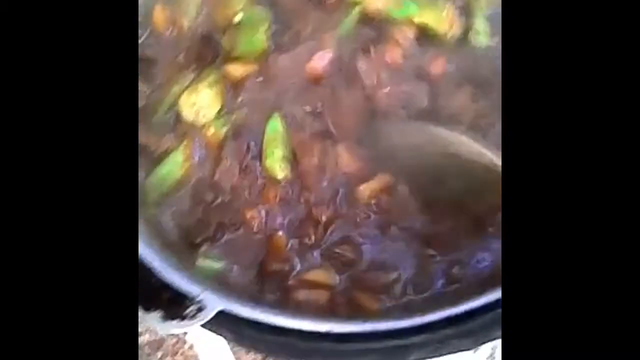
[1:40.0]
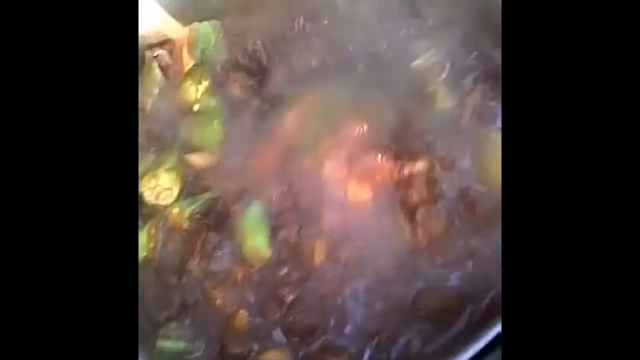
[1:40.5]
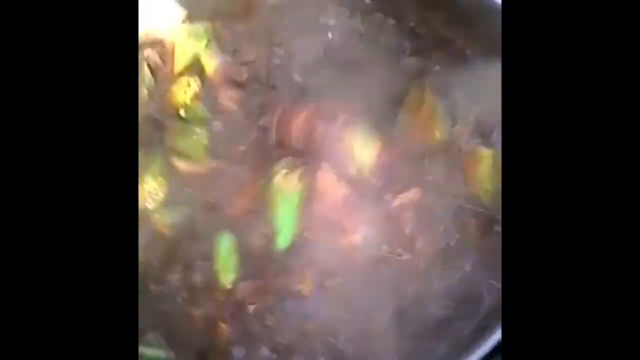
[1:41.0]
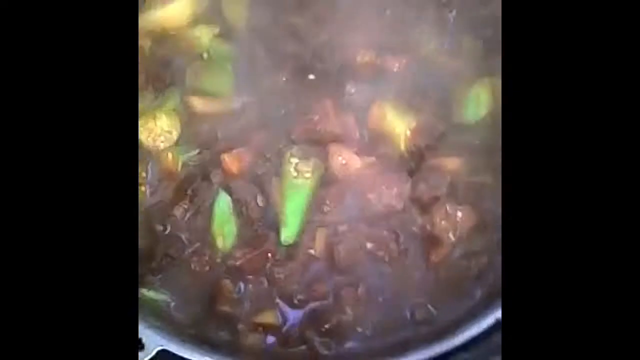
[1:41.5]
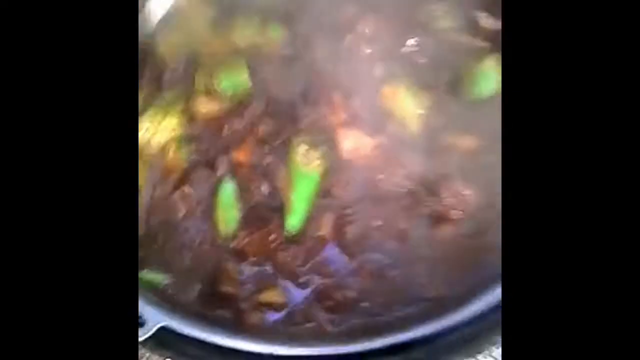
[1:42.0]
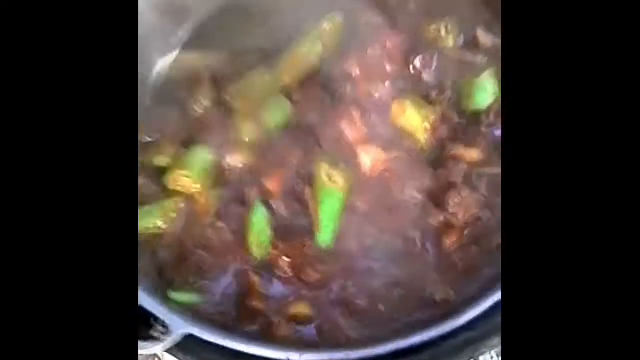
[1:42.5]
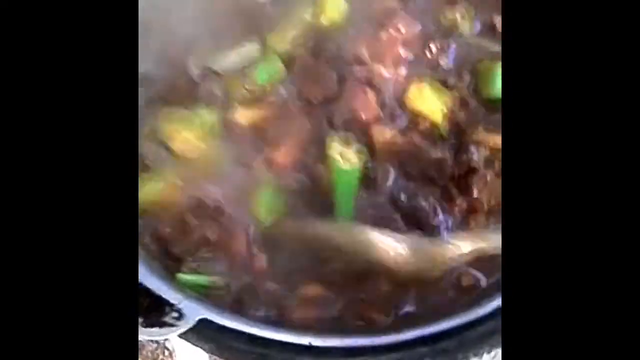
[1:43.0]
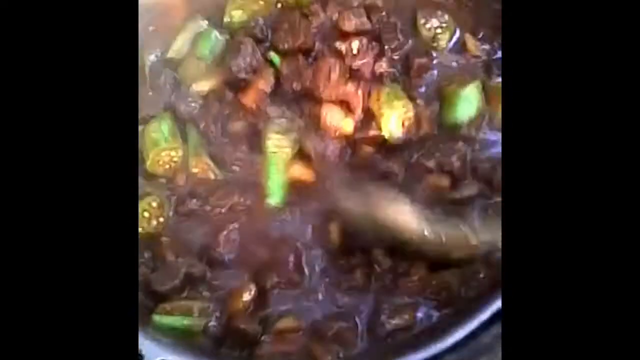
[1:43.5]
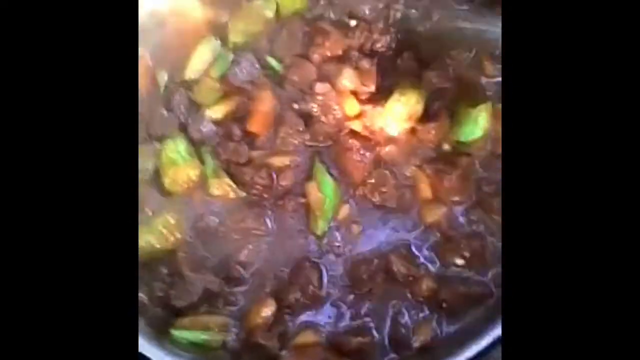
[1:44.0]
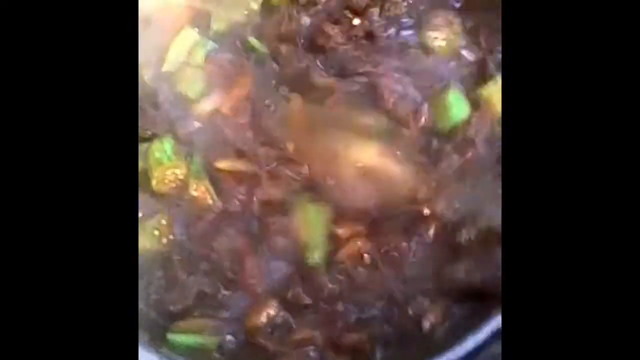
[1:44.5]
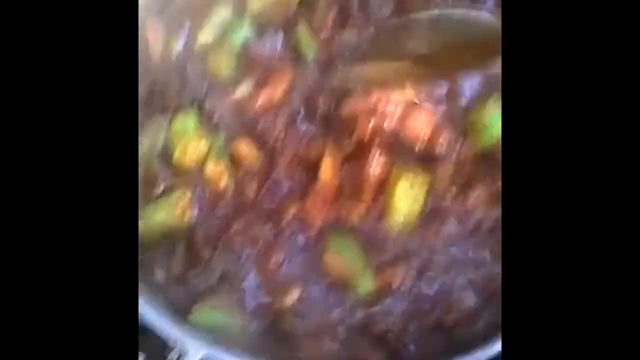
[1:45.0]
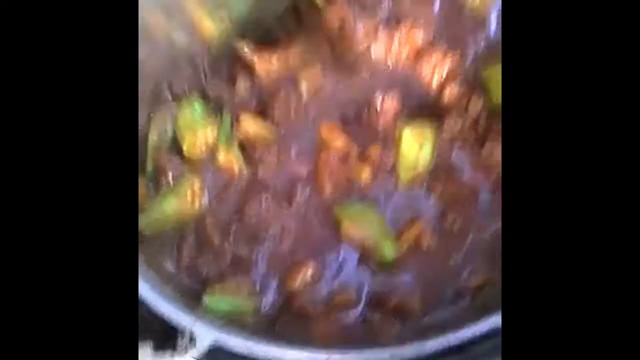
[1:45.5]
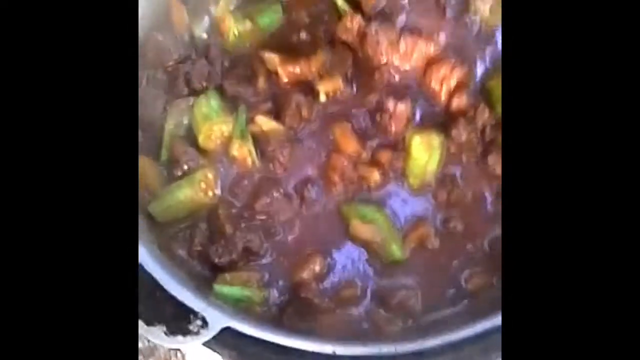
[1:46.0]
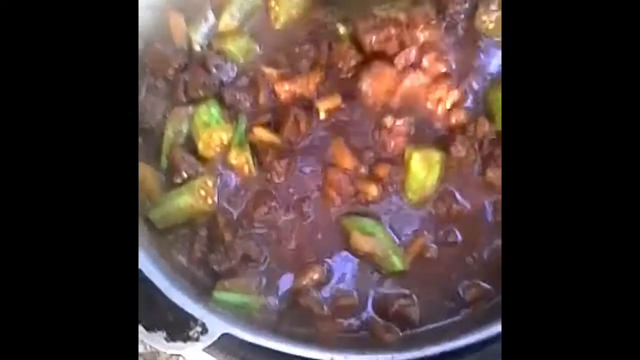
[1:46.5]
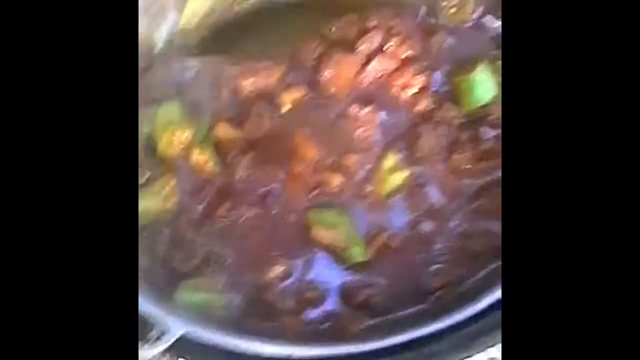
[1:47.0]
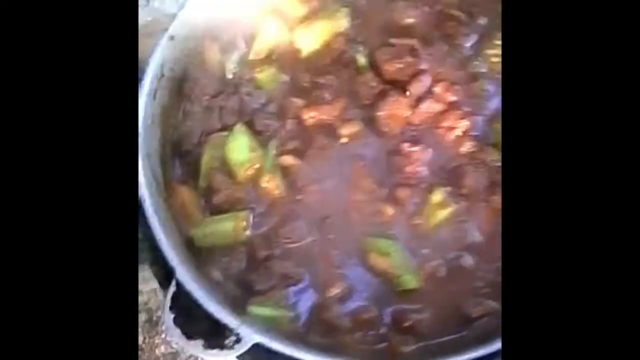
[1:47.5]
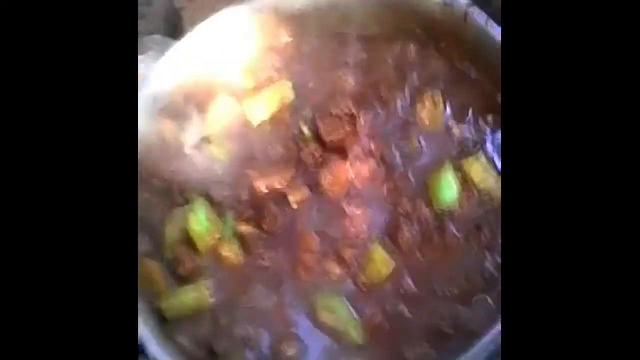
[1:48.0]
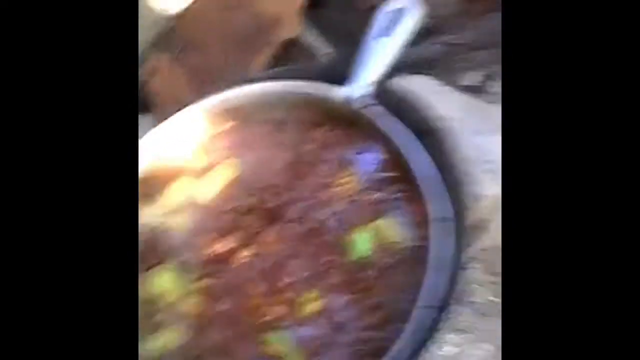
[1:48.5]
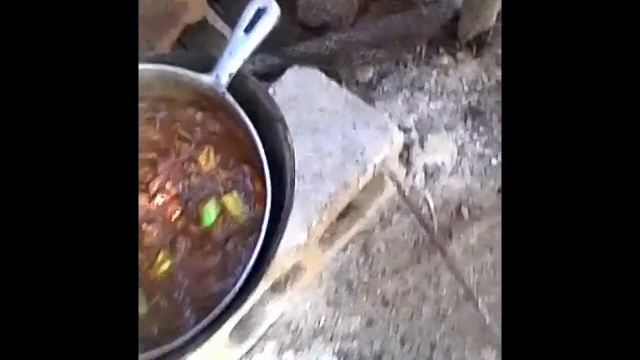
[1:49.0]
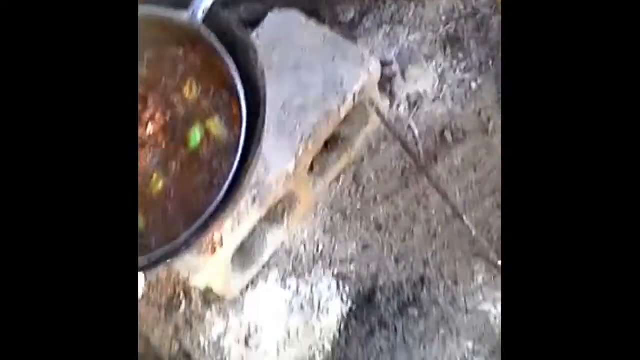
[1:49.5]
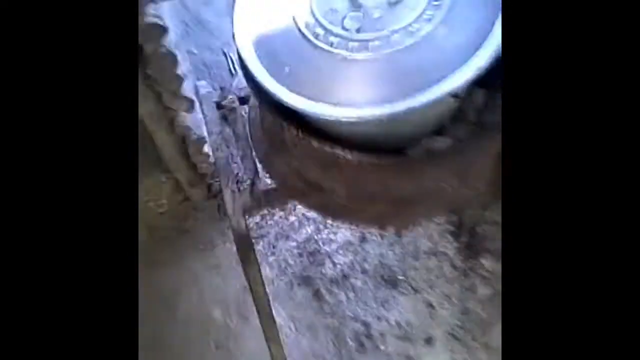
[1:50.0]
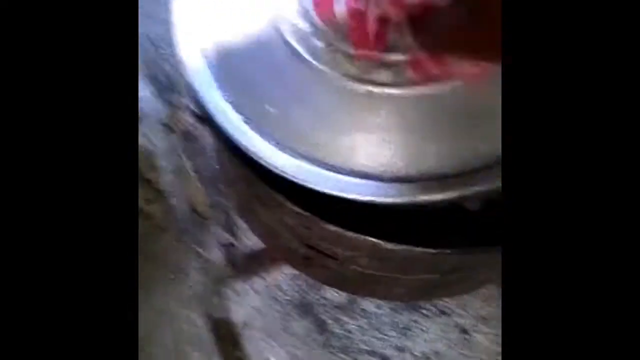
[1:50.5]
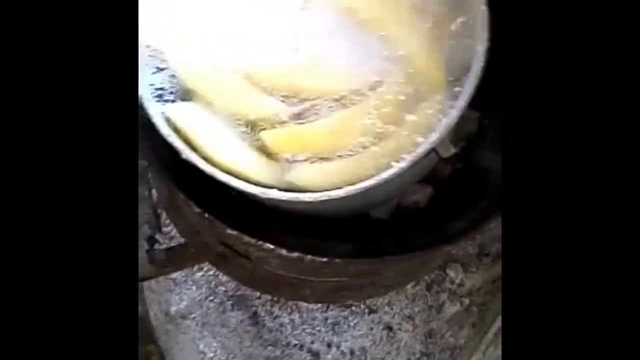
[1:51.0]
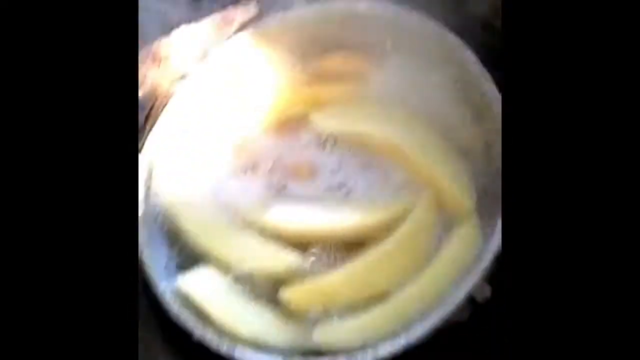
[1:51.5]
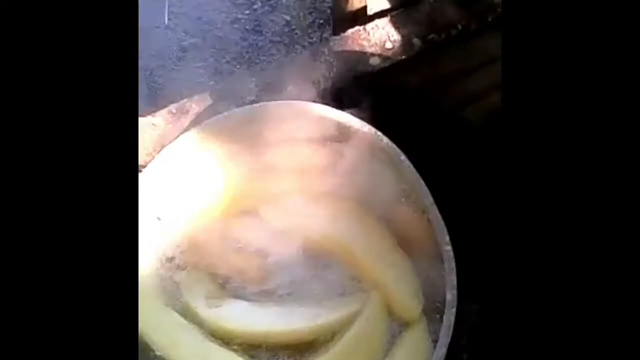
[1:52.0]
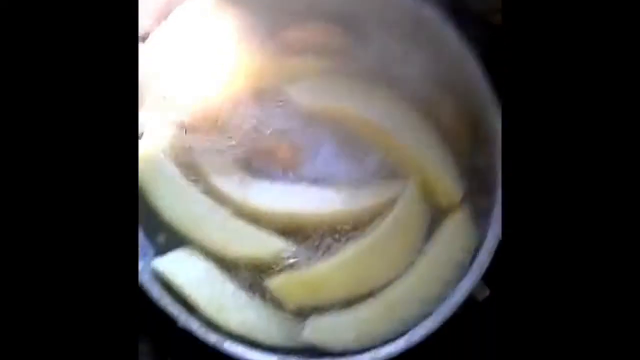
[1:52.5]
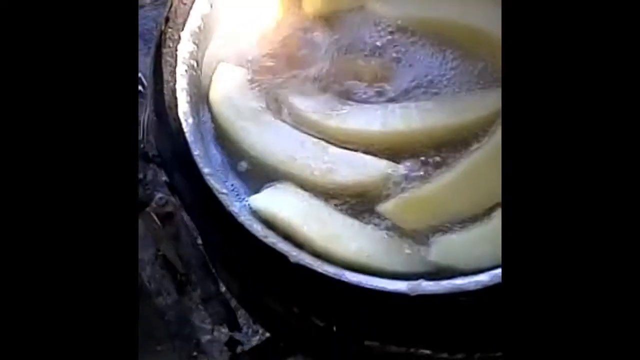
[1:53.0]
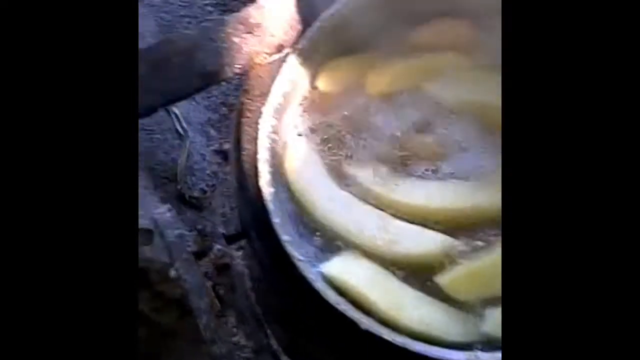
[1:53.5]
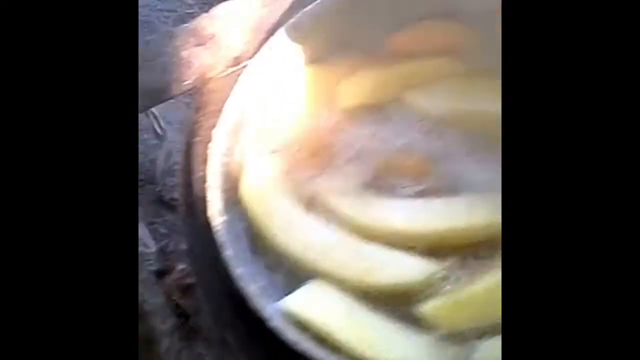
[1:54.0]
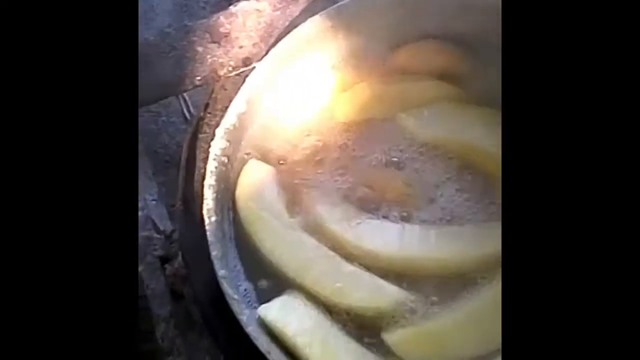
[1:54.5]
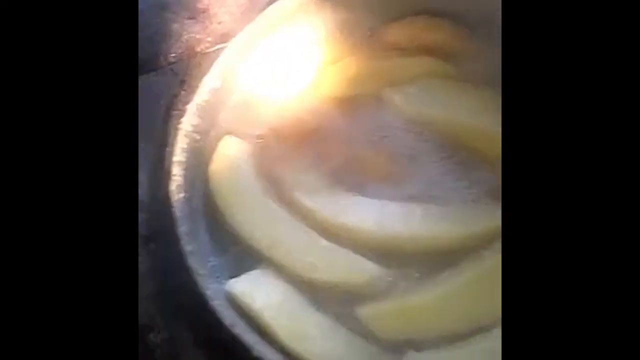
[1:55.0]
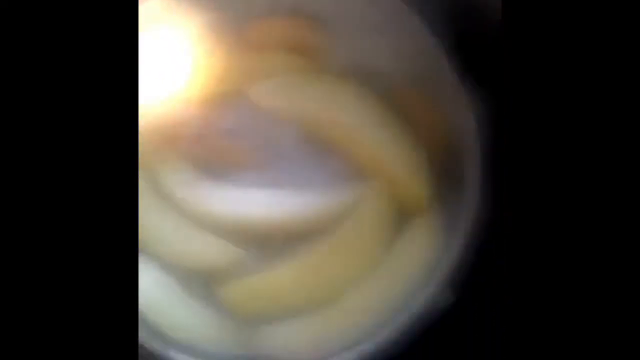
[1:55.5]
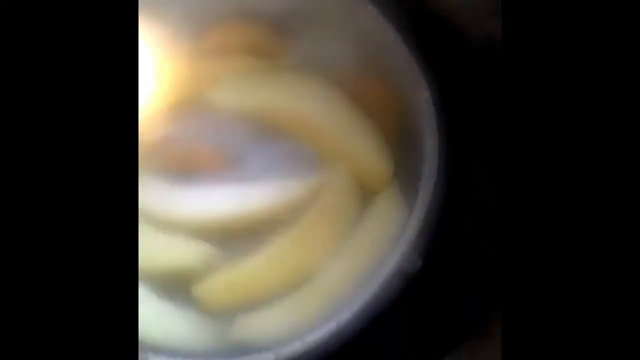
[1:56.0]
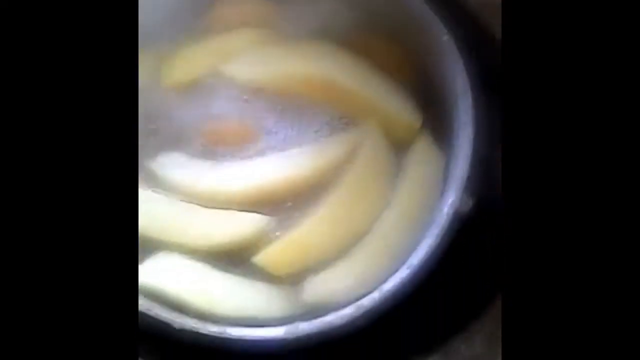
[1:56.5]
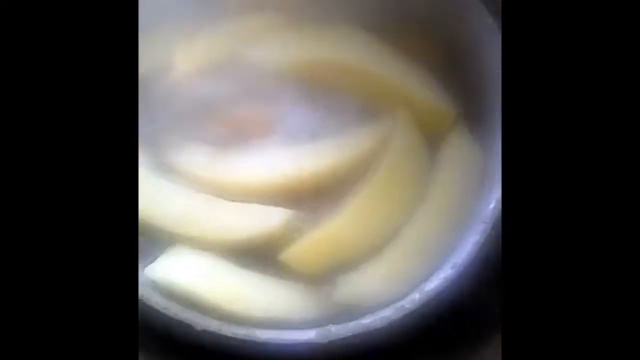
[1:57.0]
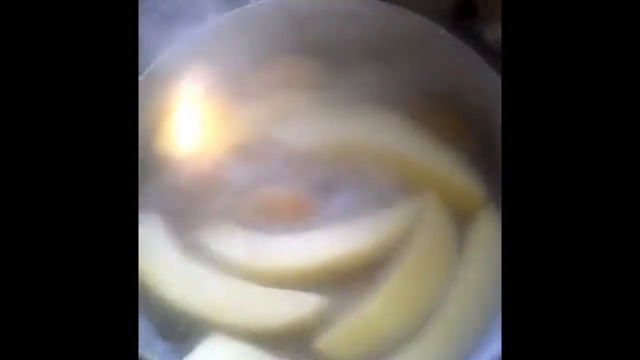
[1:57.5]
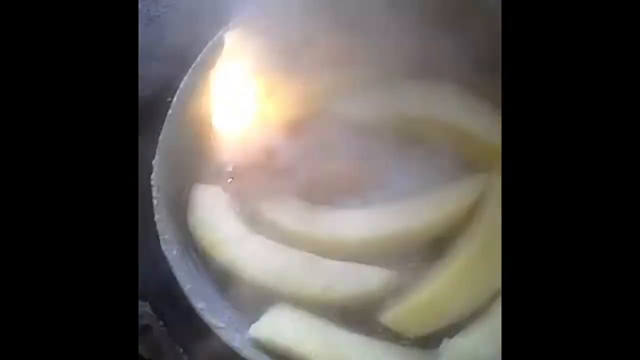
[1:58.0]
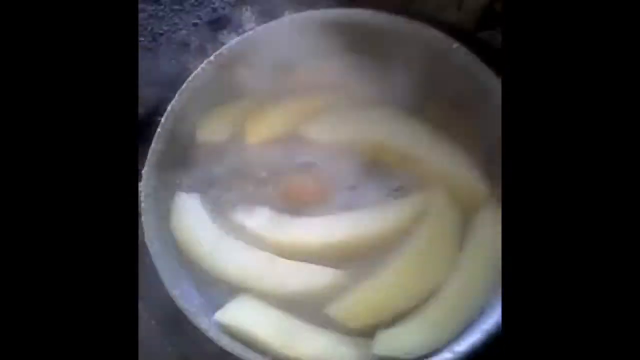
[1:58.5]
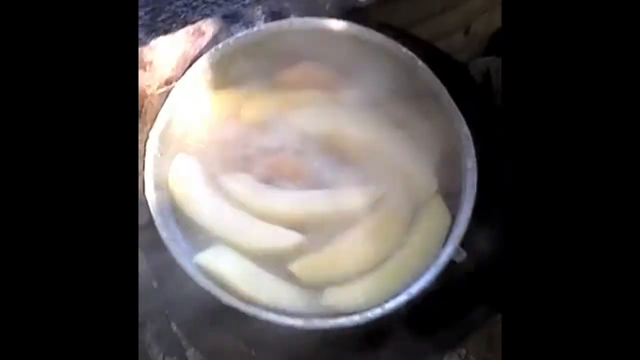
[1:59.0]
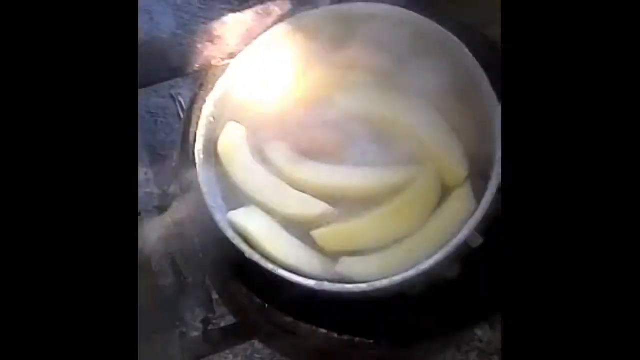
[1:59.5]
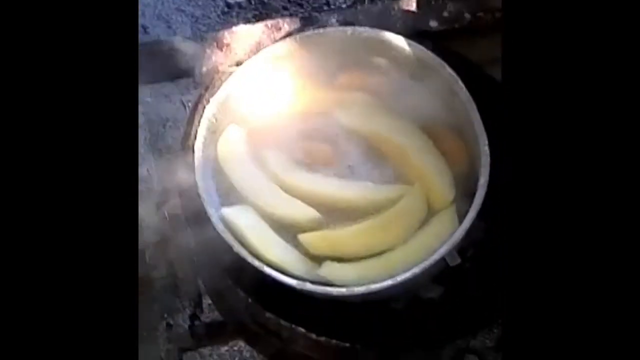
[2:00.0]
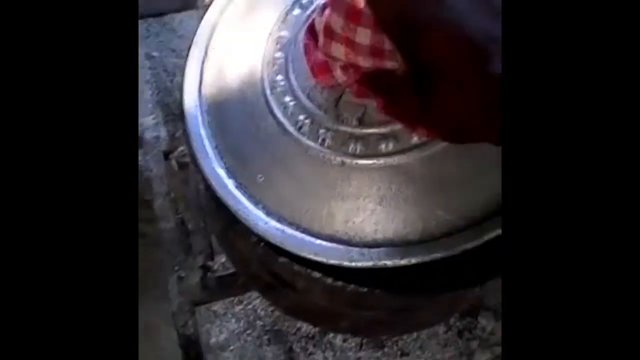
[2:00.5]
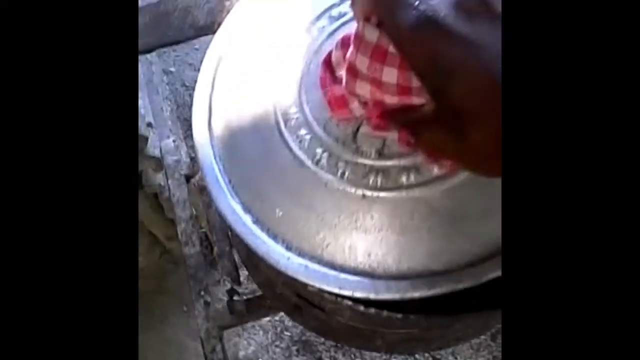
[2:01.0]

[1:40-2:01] The stew simmers and gets a little thicker. The spoon makes a couple more movements, moving slightly from the top left to the top right. It simmers slightly with a few bubbles. The camera zooms out, showing that it is on a cylinder block with two openings on the side, each with a vertical piece in the middle; the skillet sits on top of the more solid part. What looks like rebar leans against the top edge, creating a diagonal look. The camera zooms in again on some kind of curved pieces that look almost like bananas being cooked, seven of them, bubbling to the surface as the lid is pulled off. Some of the image is blurred, apparently by heat hitting the lens. The lid, which looks like some kind of cast iron silver, is put back down, using a towel to handle the handle. The towel looks like a red and white checkered picnic pattern.